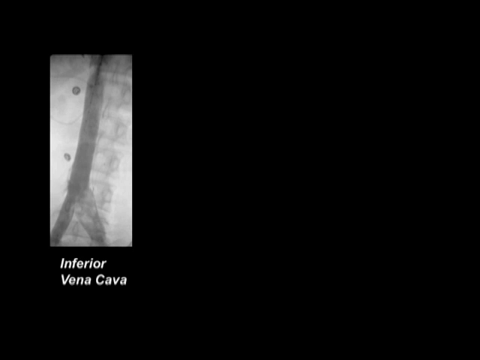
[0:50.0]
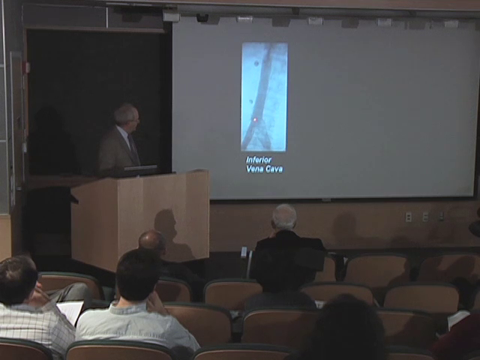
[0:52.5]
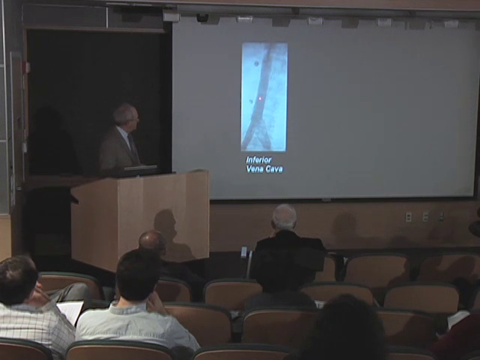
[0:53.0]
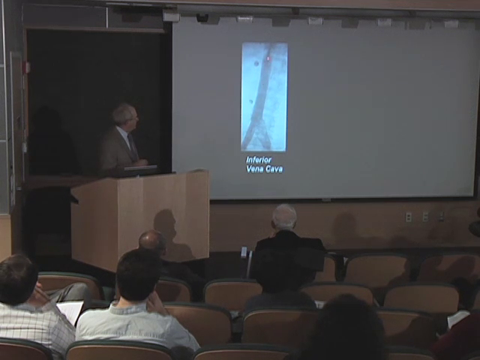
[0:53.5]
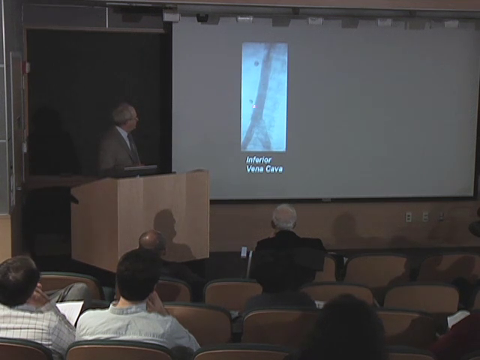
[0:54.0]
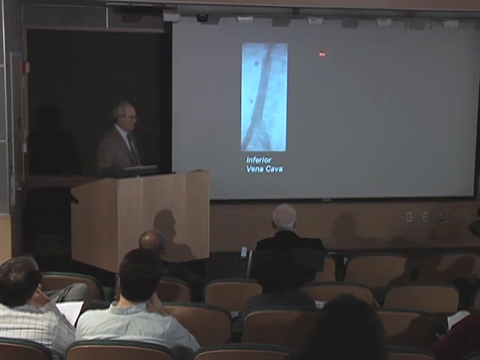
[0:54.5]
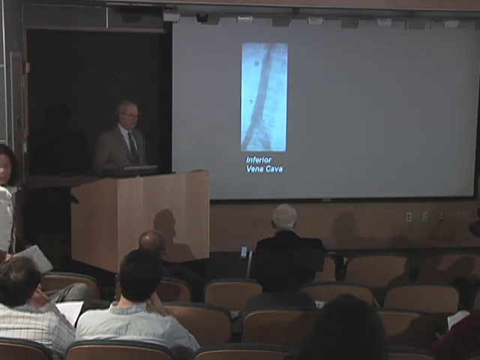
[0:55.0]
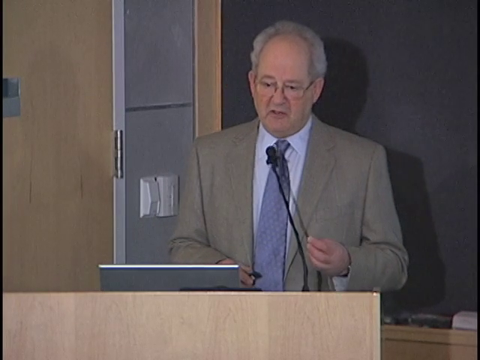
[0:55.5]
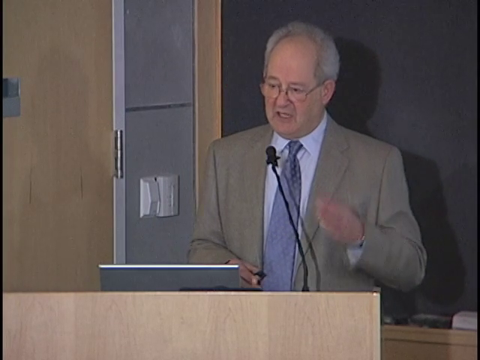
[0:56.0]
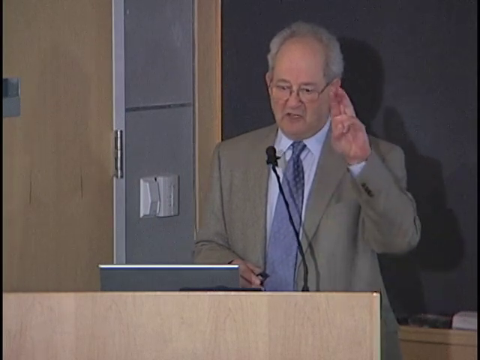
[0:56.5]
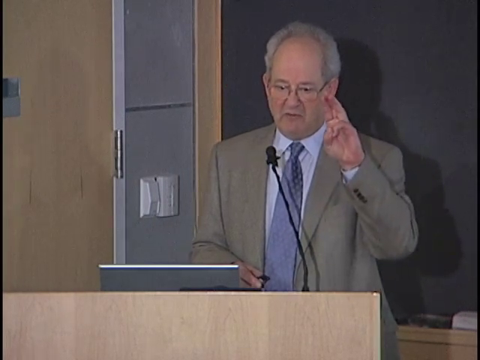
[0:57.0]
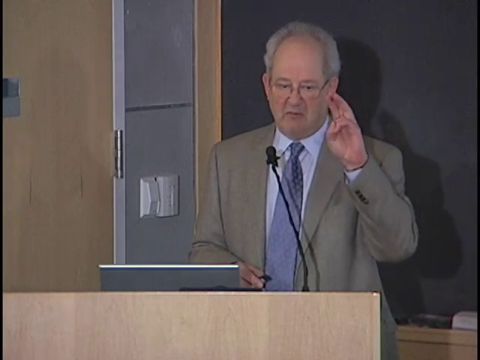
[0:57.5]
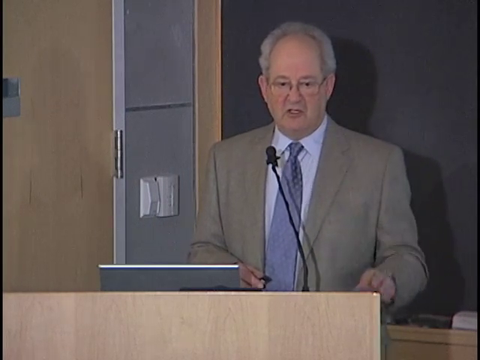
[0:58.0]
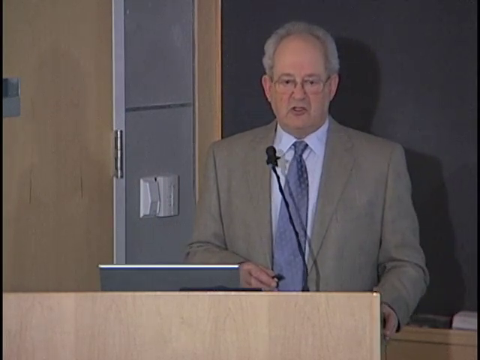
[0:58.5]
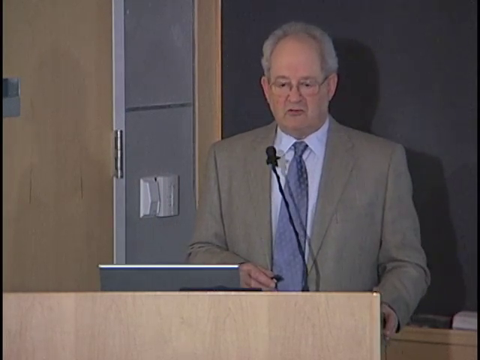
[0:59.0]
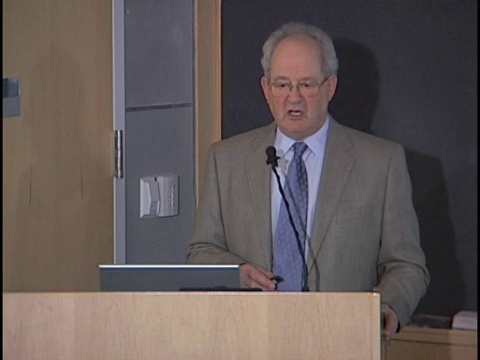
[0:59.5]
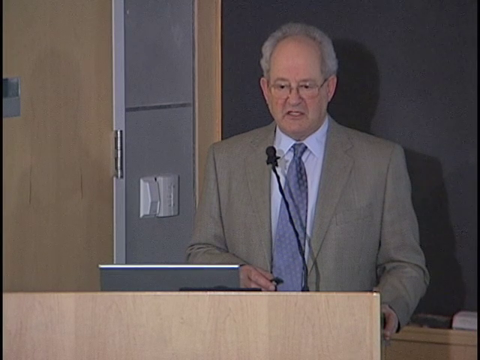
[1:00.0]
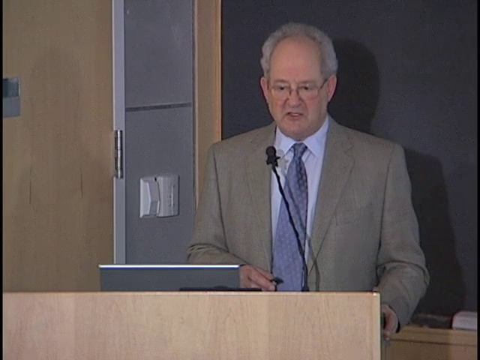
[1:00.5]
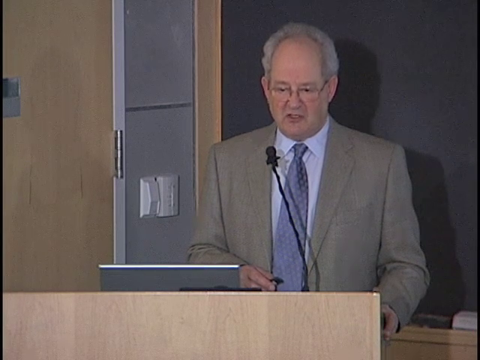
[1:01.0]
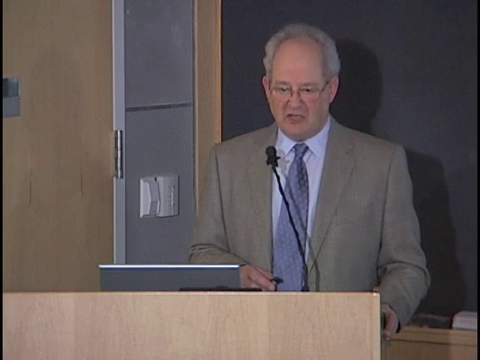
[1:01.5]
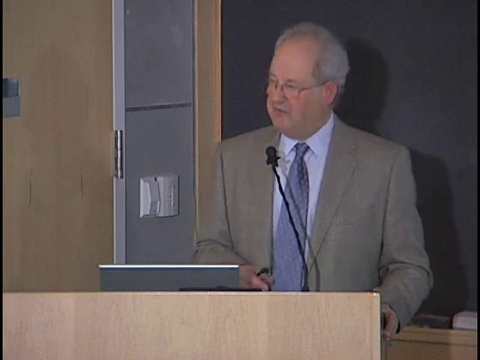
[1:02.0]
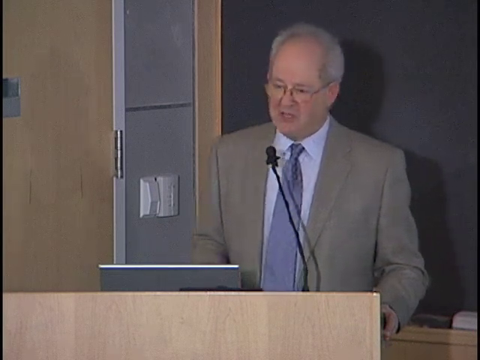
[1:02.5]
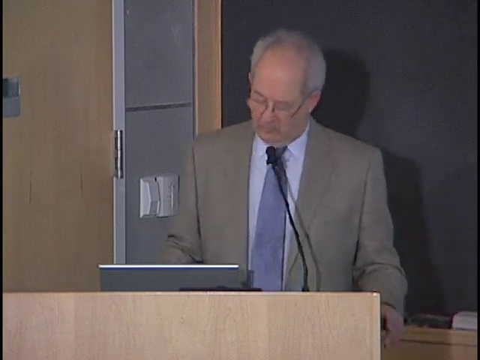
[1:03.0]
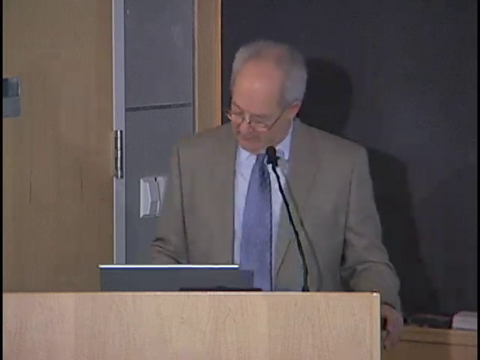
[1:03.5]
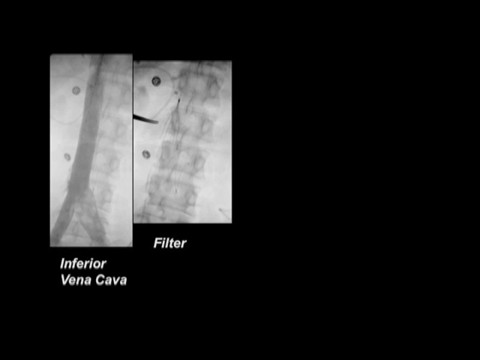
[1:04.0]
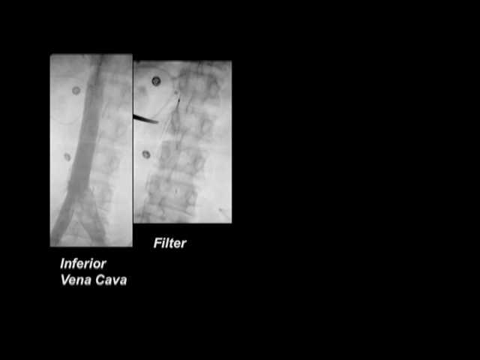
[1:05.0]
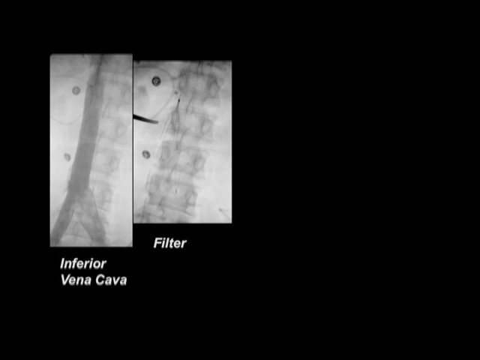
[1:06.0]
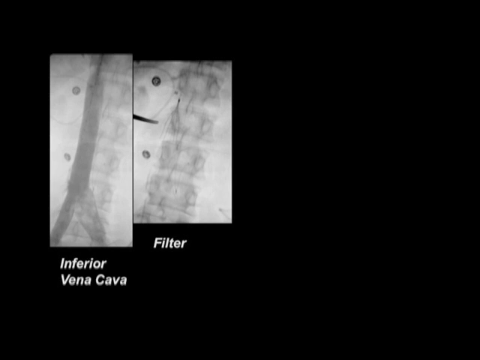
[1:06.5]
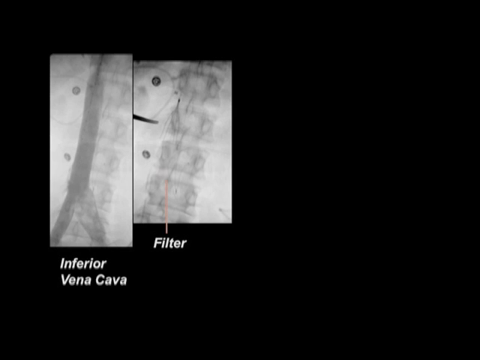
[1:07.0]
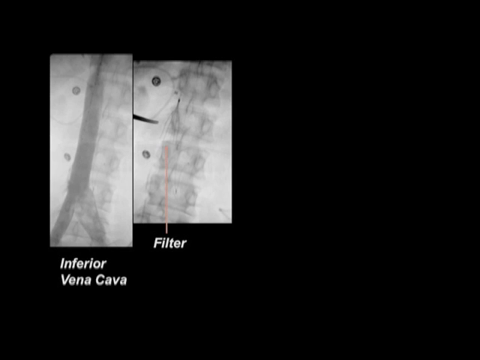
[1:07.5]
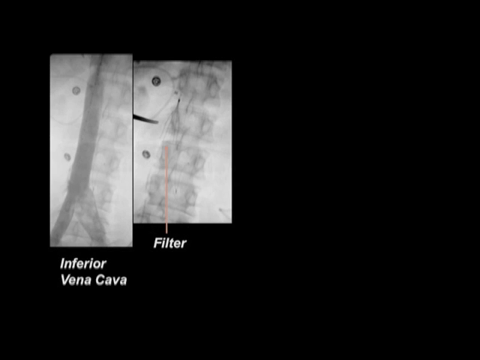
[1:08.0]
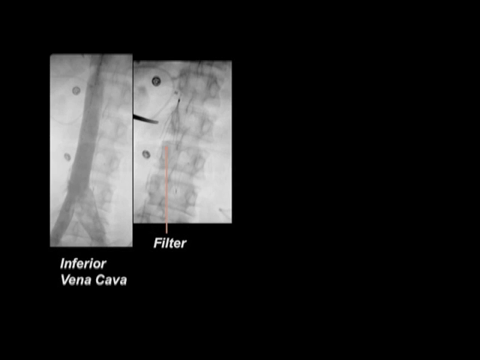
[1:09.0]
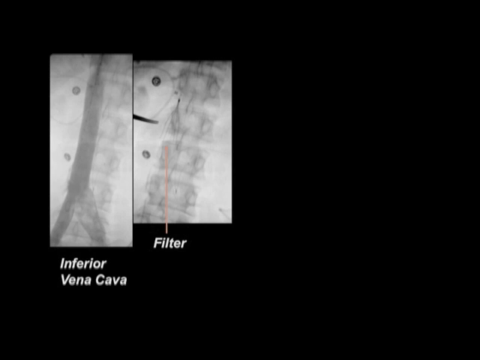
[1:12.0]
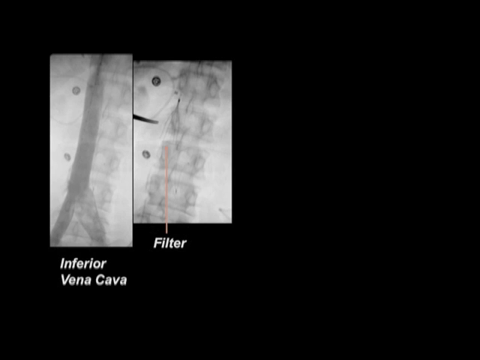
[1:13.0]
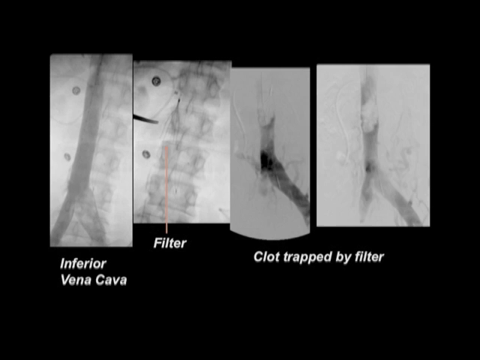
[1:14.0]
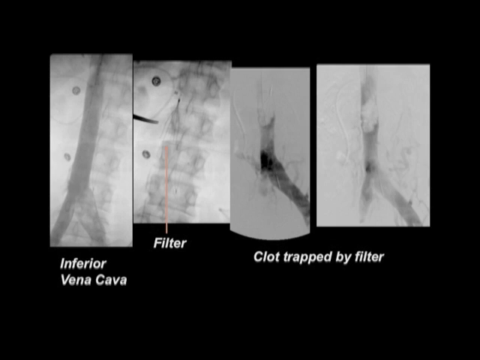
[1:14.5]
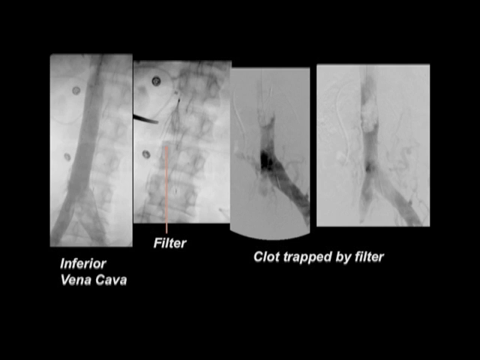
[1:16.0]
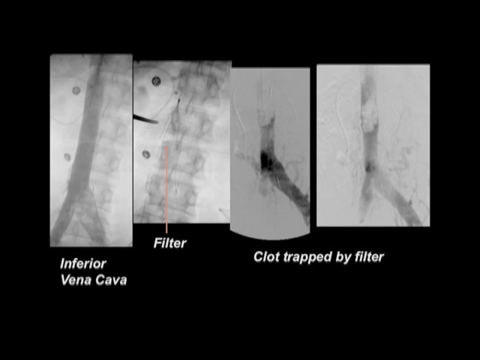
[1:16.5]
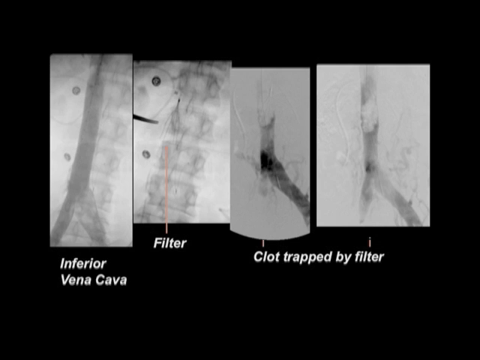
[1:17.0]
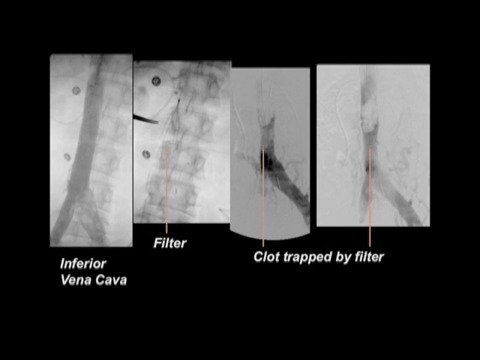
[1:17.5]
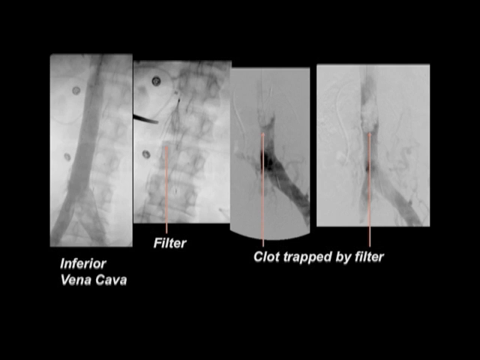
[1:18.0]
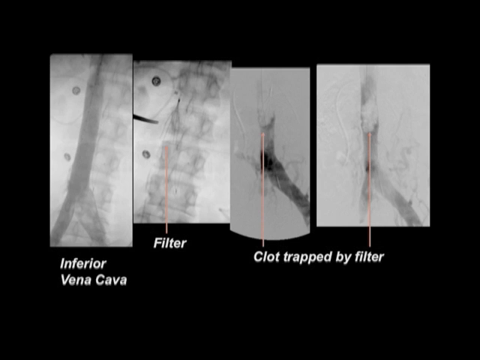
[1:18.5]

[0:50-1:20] On a black background is an image showing the inferior vena cava. A man then stands at a podium, with a board kind of on the wall showing a presentation, and a few different people sit in chairs watching in a darkly dimmed room. Somebody walks on the side before the view changes to an up-close shot of the man, who speaks into a microphone, wears glasses, and has a computer in front of him at the podium. He puts his hand up, kind of combining three fingers together, continues to speak into the microphone, and then looks down at his computer. Another image shows a filter, with a pink line going up to the image from the text. Additional images show a clot trapped by filter, with more pink lines going from the text to the images.